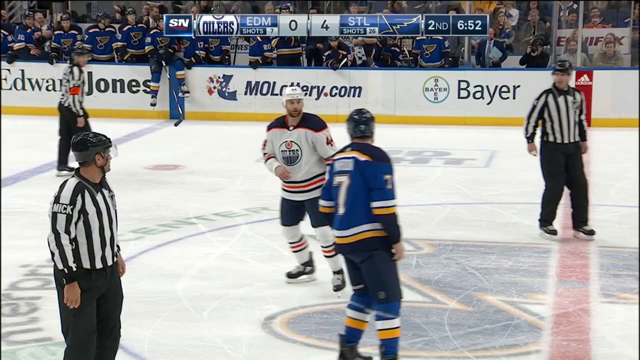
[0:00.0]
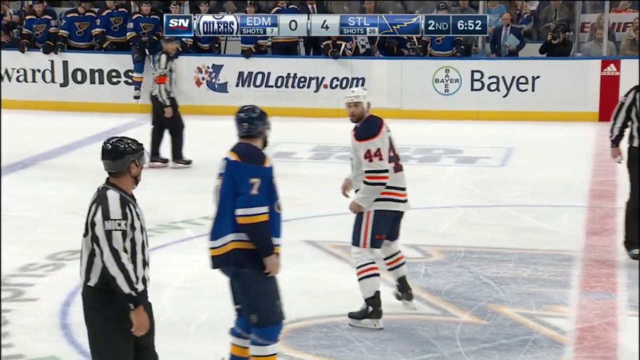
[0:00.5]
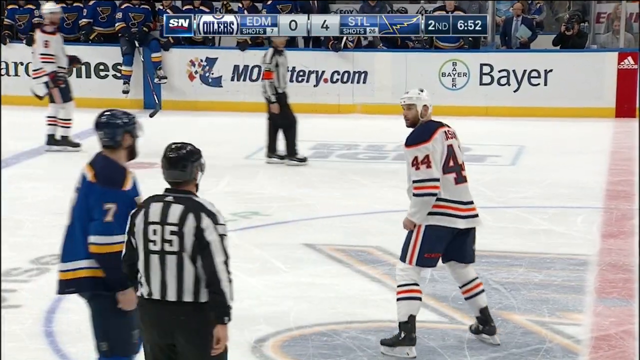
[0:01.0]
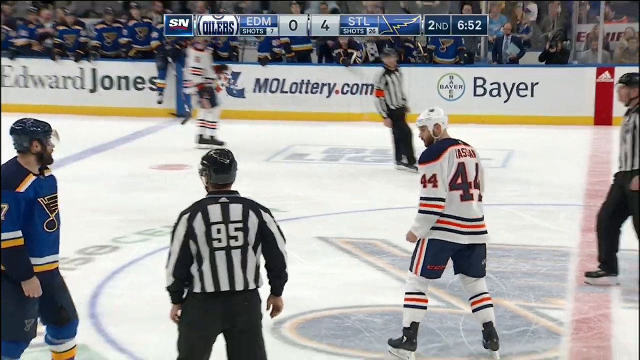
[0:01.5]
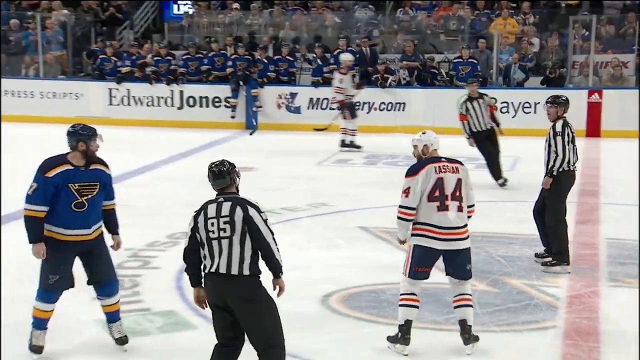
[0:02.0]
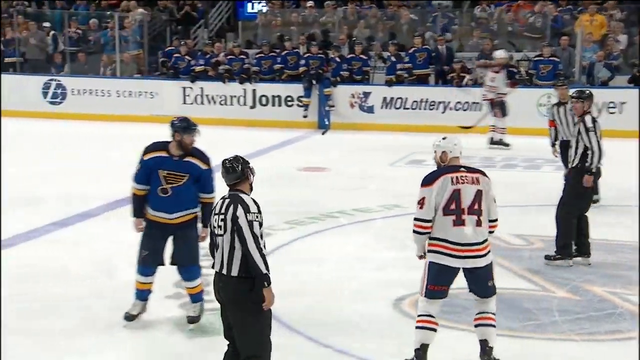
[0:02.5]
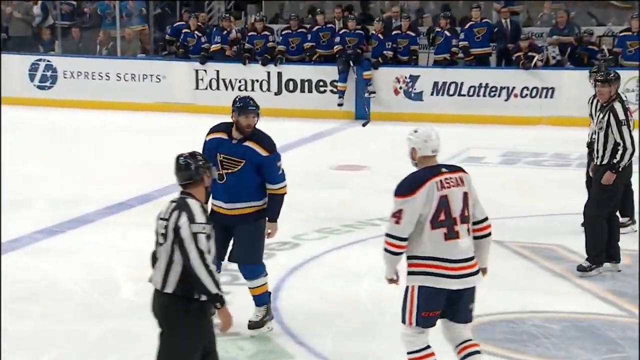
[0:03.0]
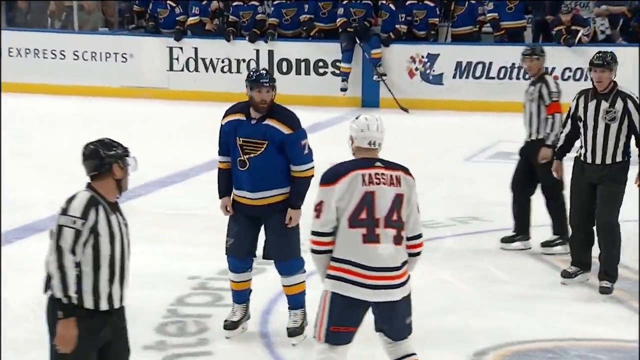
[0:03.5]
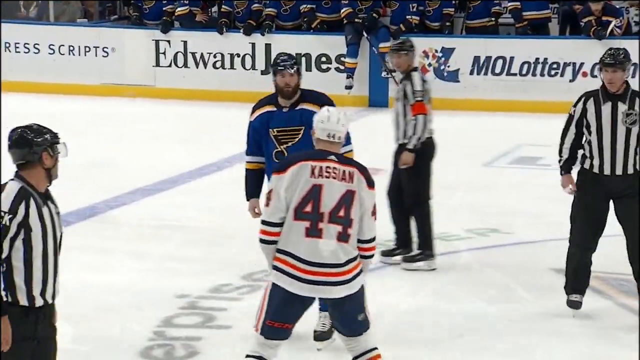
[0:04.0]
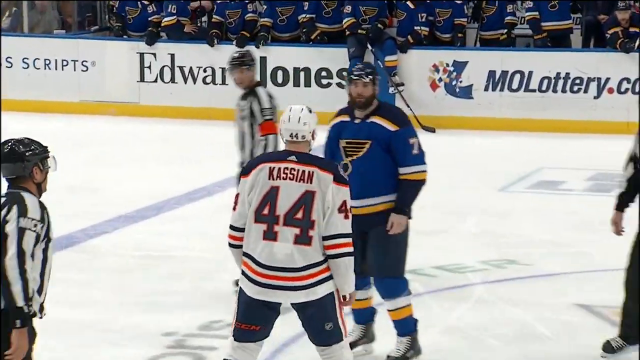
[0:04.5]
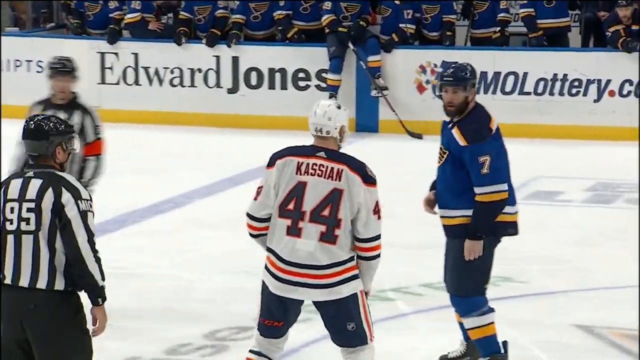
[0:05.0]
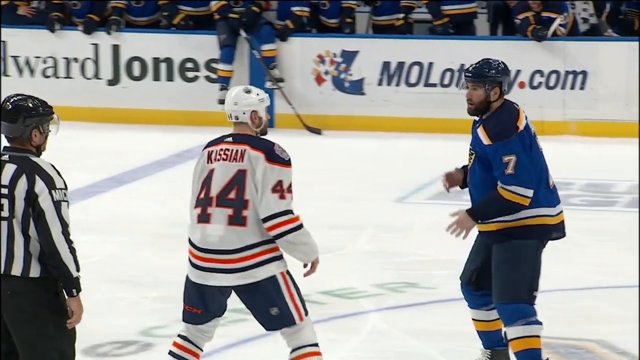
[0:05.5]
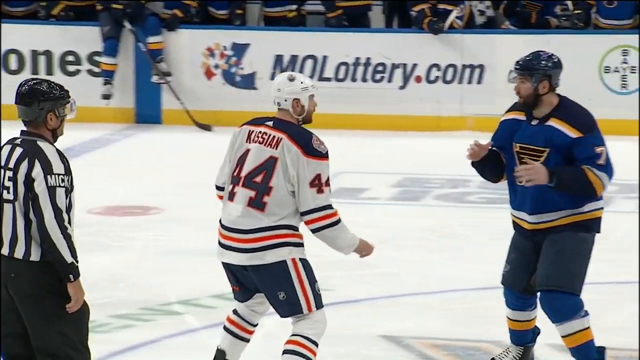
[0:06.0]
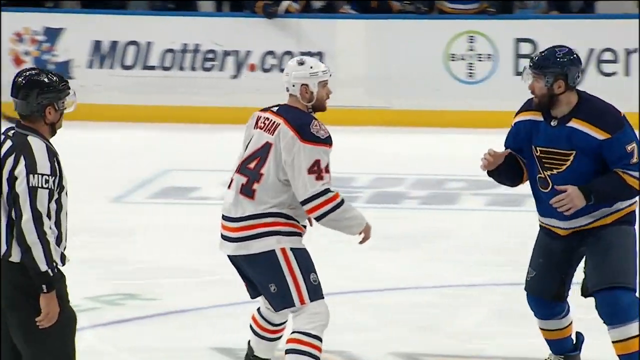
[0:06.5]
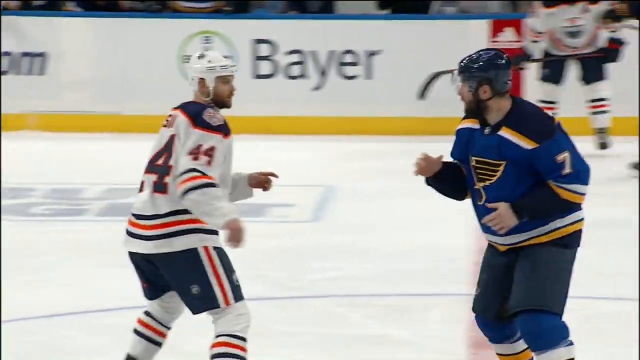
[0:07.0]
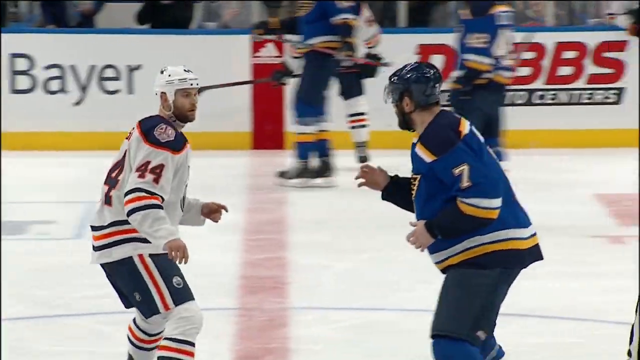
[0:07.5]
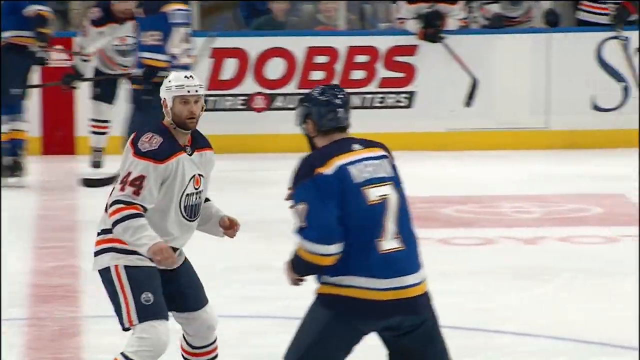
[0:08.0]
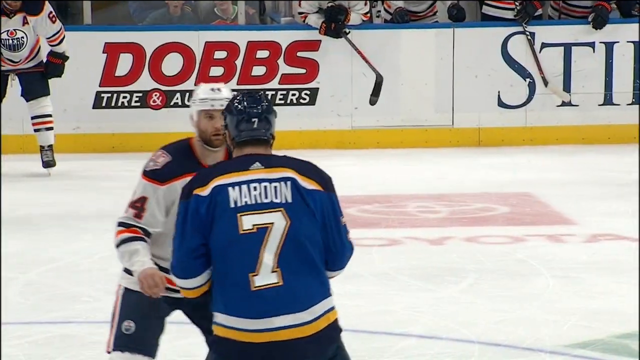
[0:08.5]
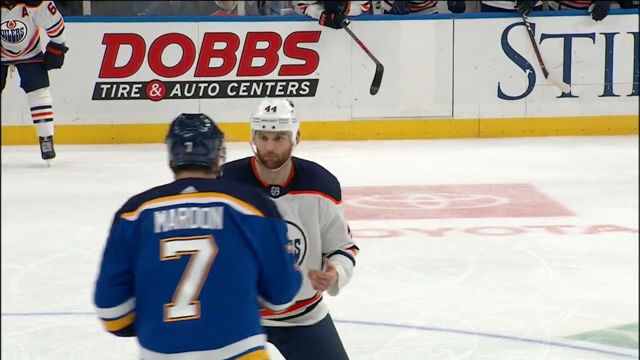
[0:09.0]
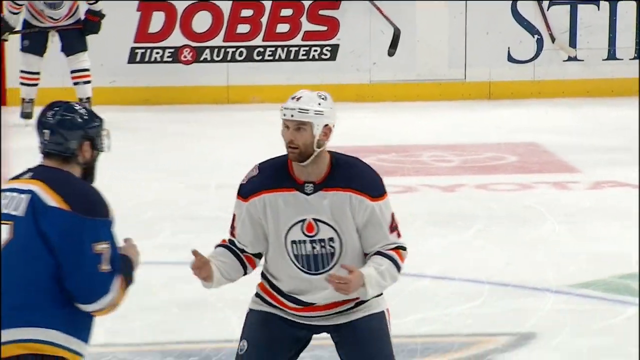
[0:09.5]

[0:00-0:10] Two hockey players skate around each other in the middle of the ice rink, about to engage in fisticuffs. The referees swirl around the two fighters to keep them in check, while the rest of the players watch from off to the side. Kassian is in the white jersey and plays for the Oilers; Maroon is in the blue jersey, number seven, and plays for the St. Louis Blues. The scene takes place in the middle of the rink. Ads from Bayer, Dobbs, Edward Jones and the Missouri Lottery are written on the boards behind the skaters. The two have not started fighting yet.